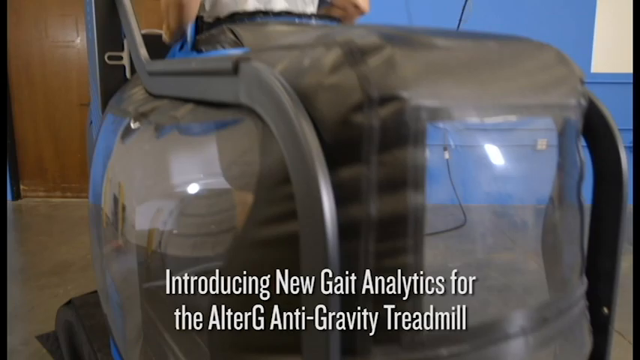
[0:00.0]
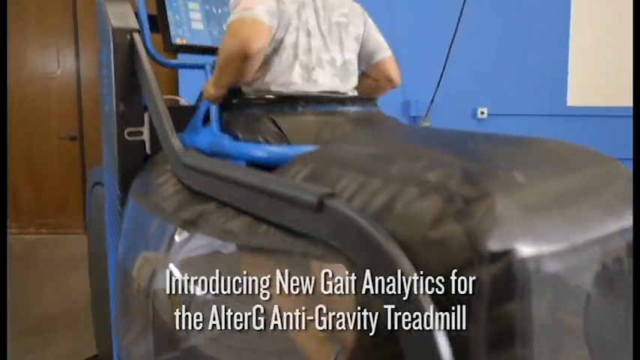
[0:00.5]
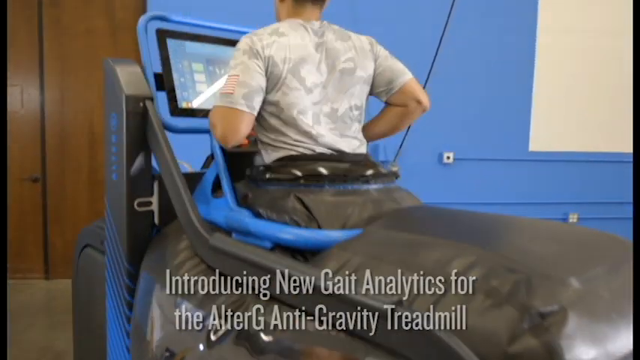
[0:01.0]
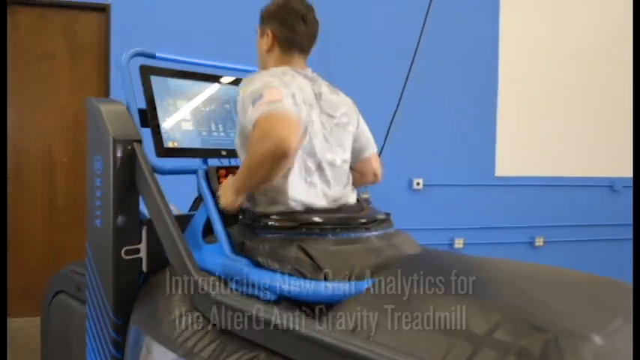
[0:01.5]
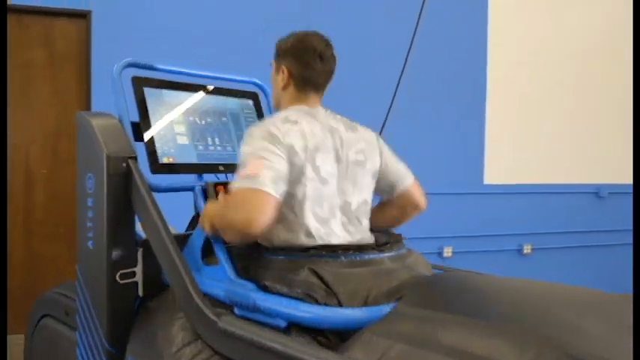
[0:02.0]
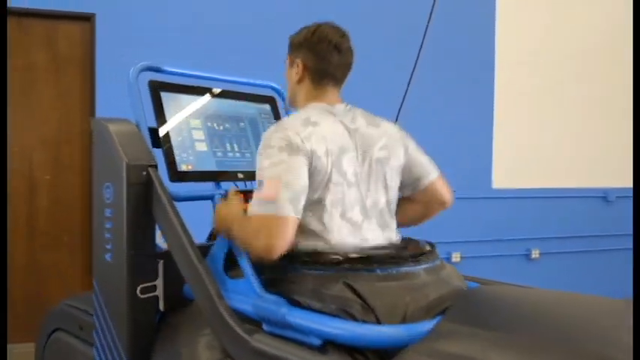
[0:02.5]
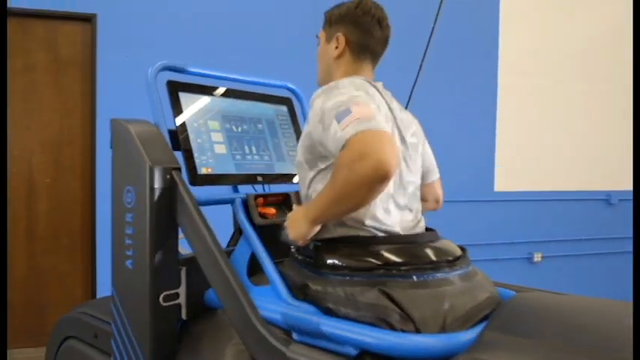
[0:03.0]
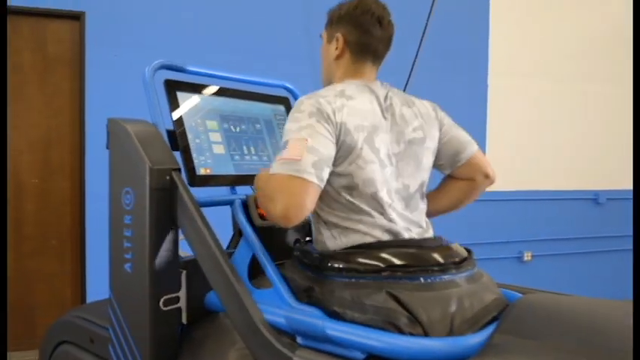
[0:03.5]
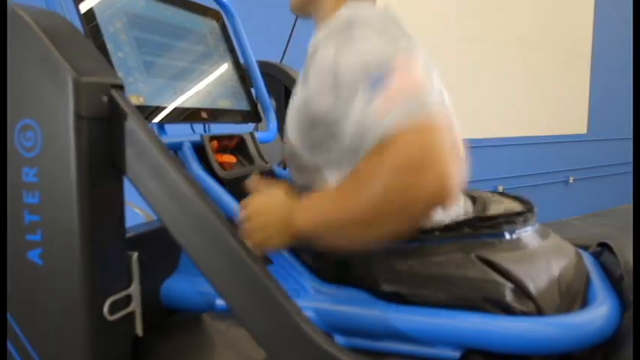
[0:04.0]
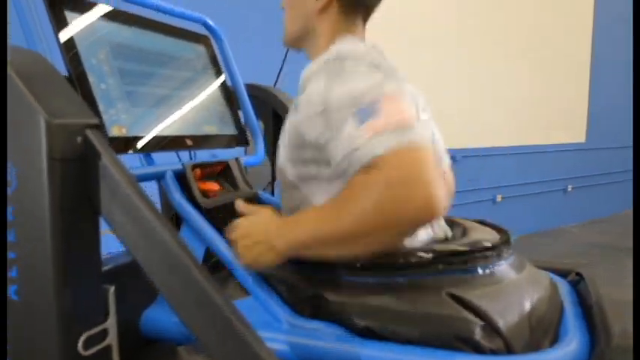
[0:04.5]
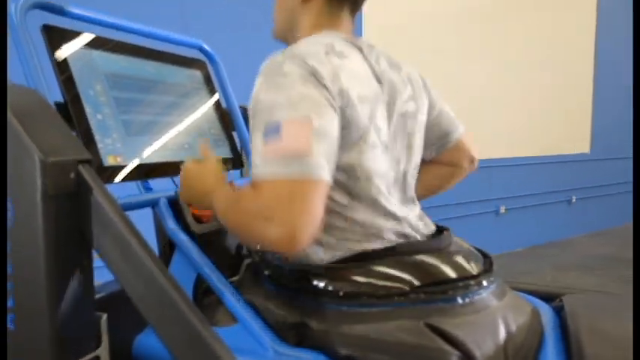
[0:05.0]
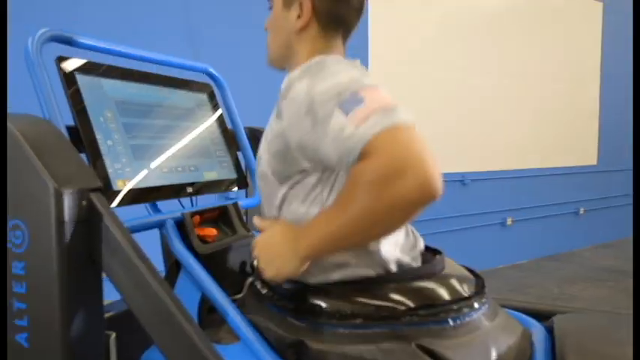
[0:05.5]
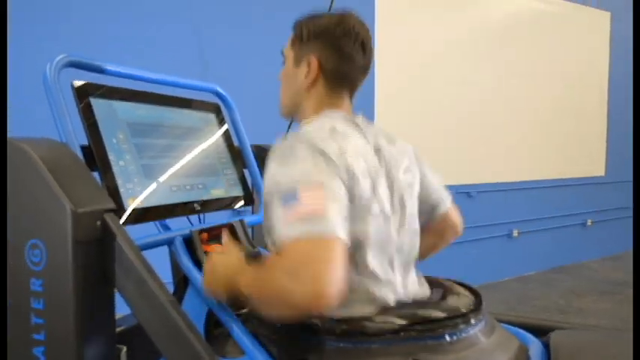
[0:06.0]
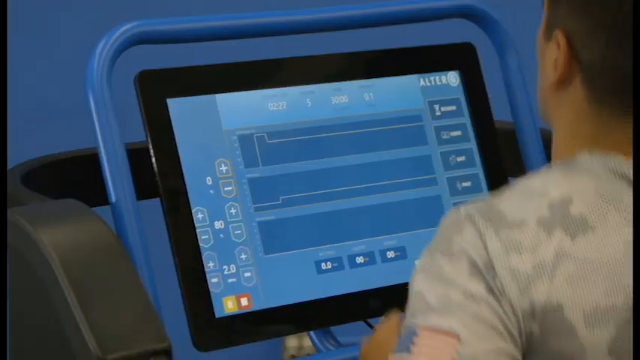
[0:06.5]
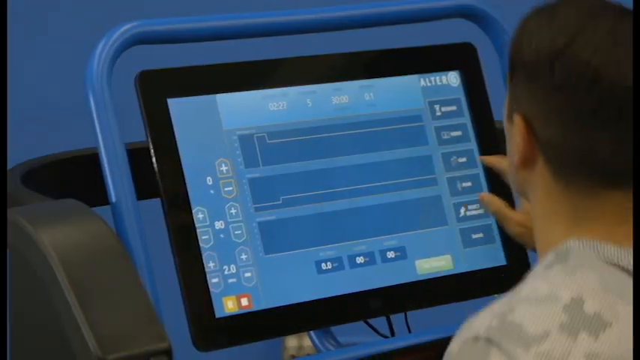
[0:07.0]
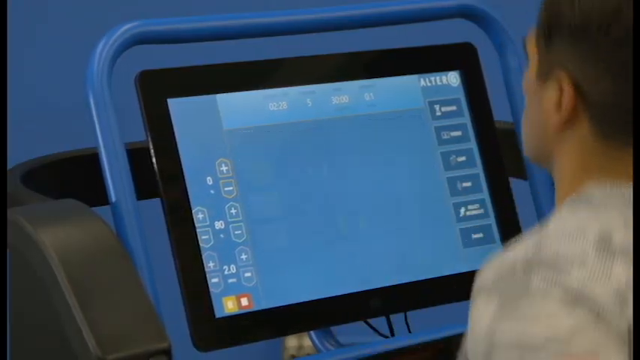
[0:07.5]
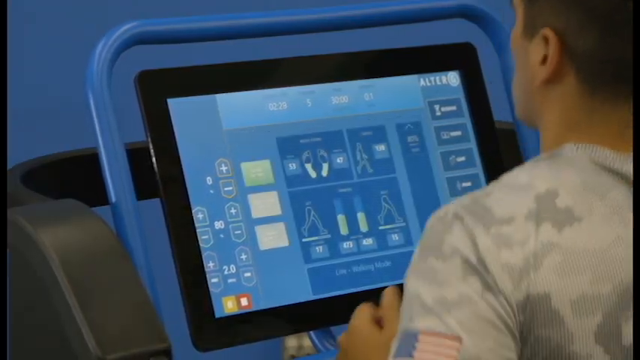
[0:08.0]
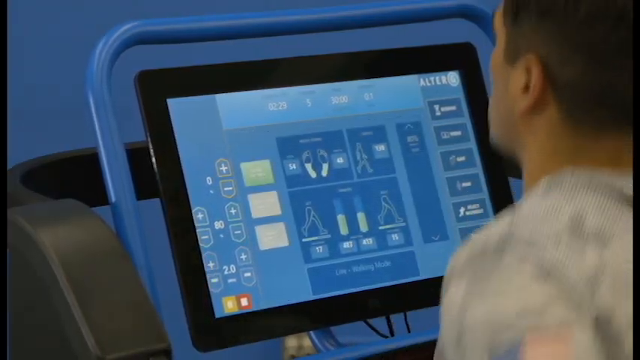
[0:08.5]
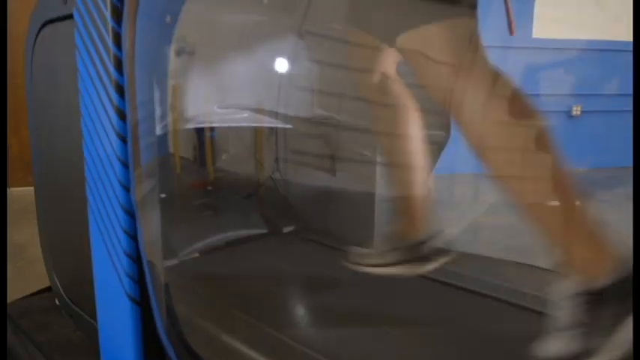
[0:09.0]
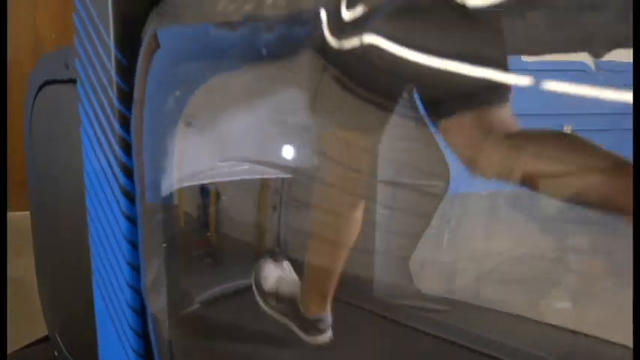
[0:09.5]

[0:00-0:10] The camera pans upward while text at the bottom centre of the screen reads "Introducing New Gait Analytics for the Alter-G Anti-Gravity Treadmill." A man wearing a t-shirt with an American flag on the left side is using a treadmill device. He runs on the spot with his hands moving at his sides and his elbows bent at right angles, one in front of the other, as though running forward. The device appears to have a covering from the waist down, like a tent cover. The man faces away from the camera, looking at an LCD screen.